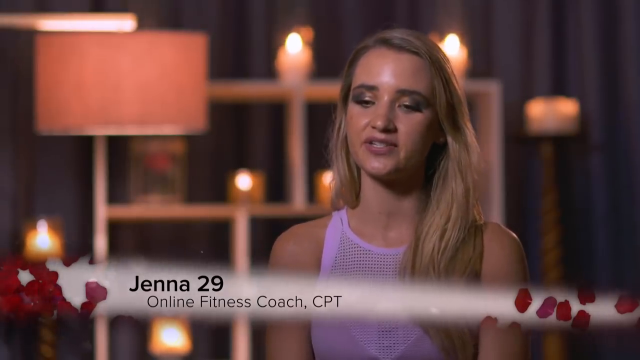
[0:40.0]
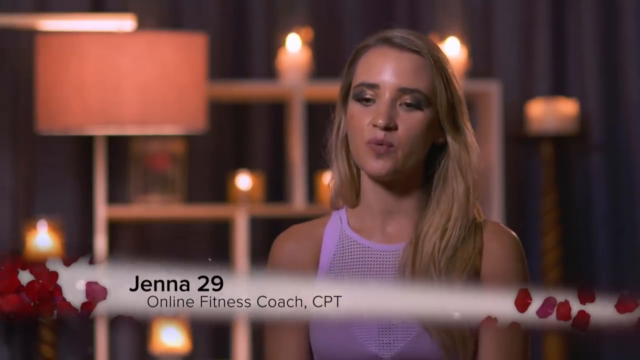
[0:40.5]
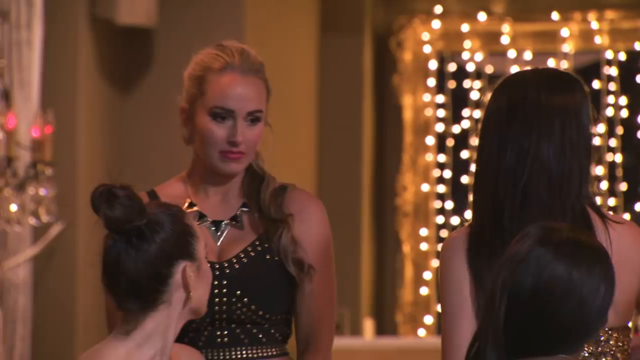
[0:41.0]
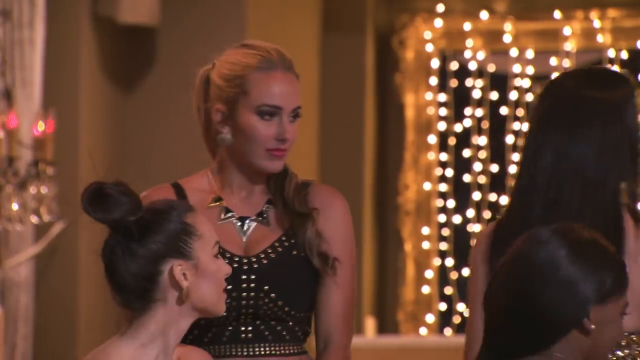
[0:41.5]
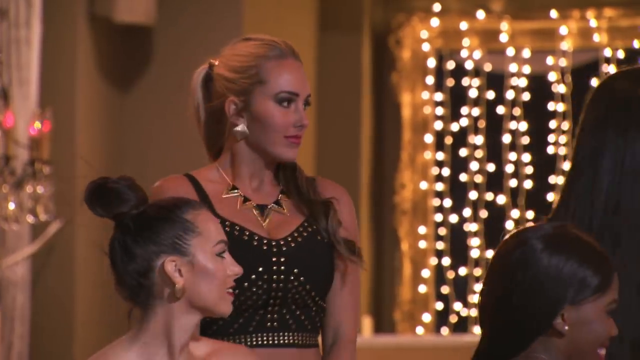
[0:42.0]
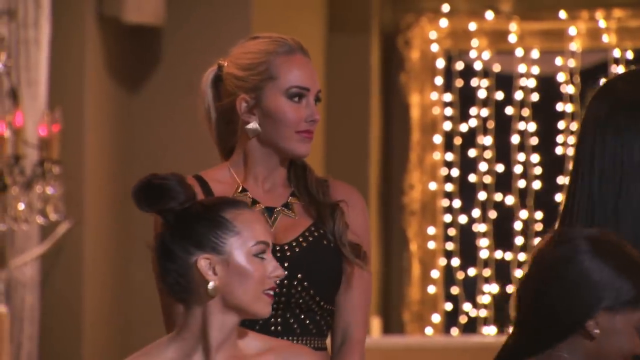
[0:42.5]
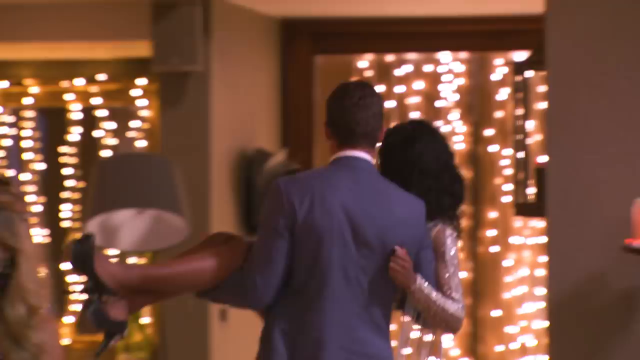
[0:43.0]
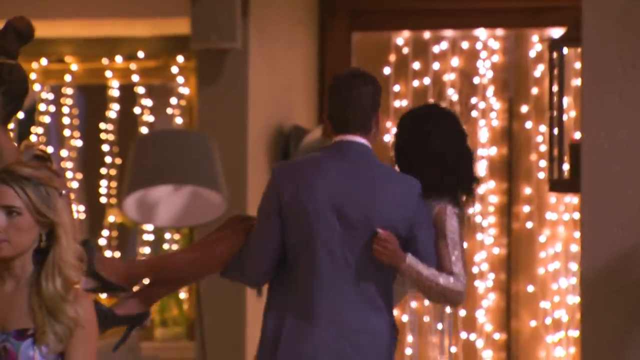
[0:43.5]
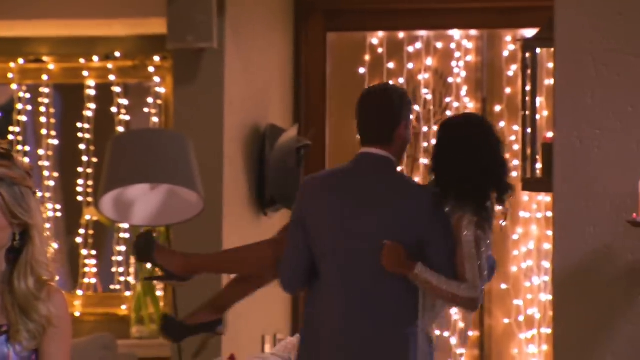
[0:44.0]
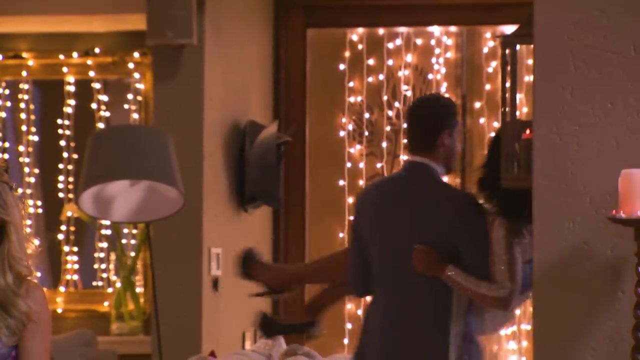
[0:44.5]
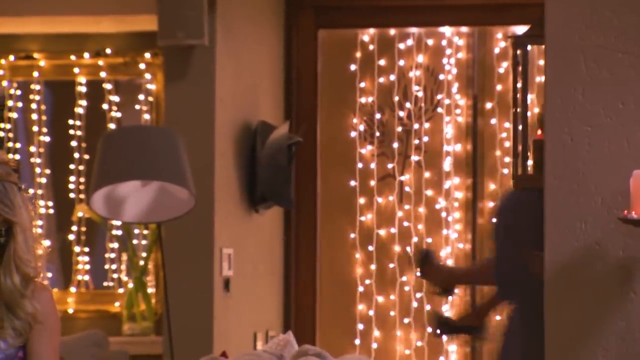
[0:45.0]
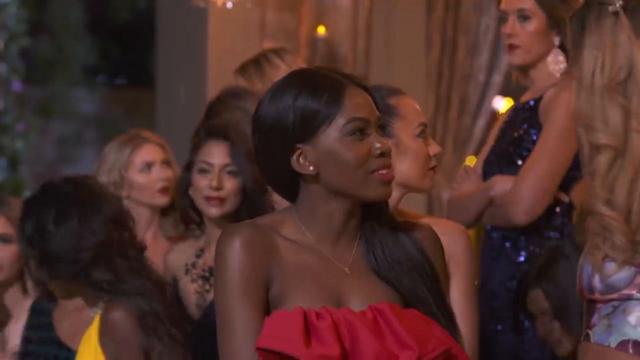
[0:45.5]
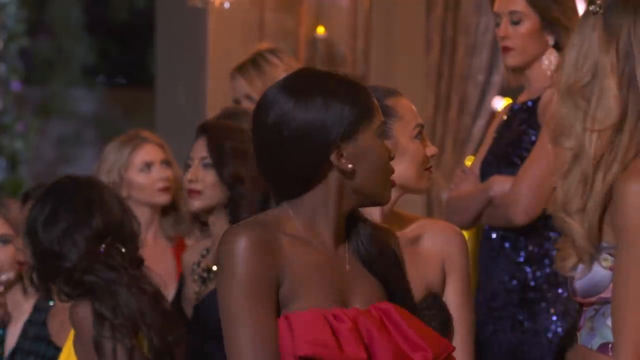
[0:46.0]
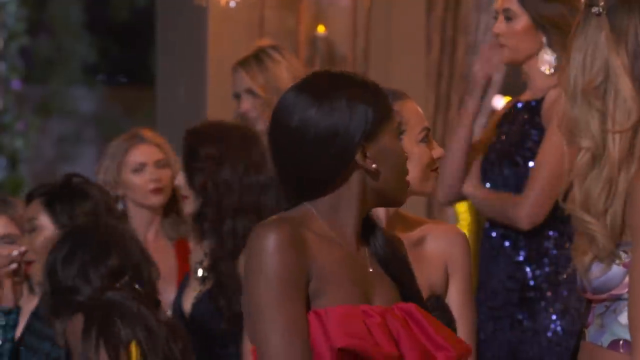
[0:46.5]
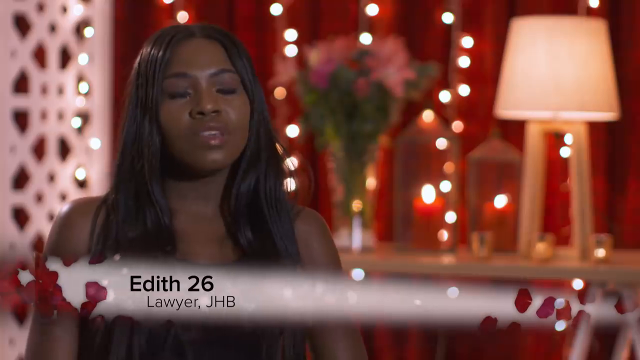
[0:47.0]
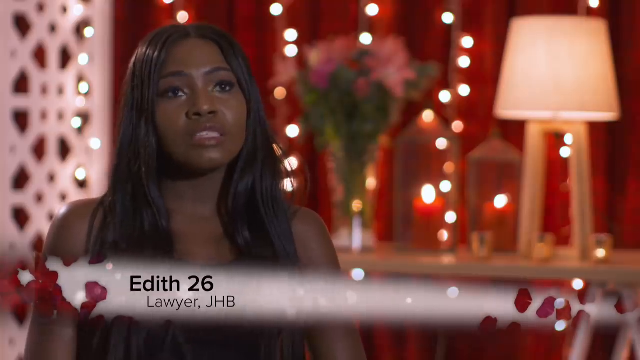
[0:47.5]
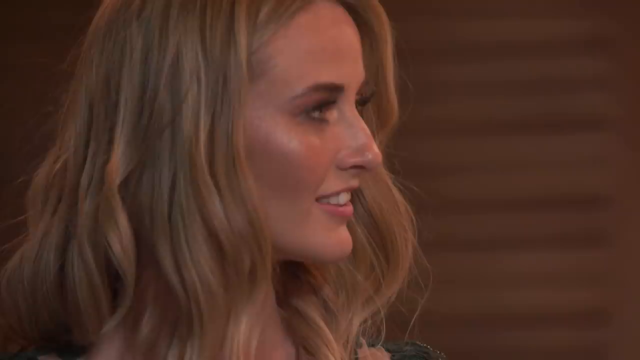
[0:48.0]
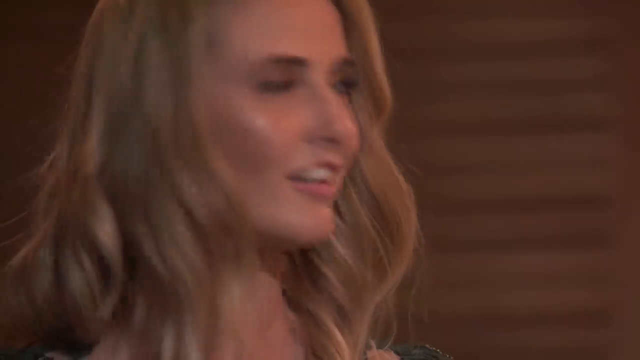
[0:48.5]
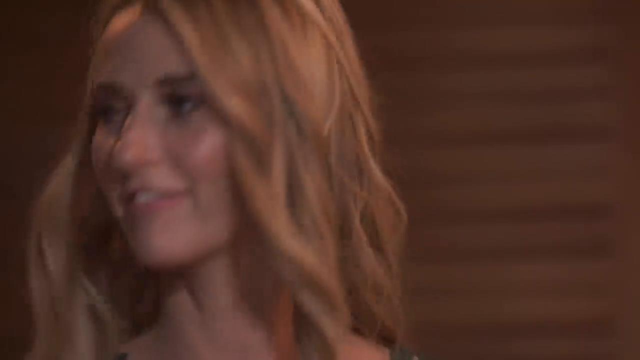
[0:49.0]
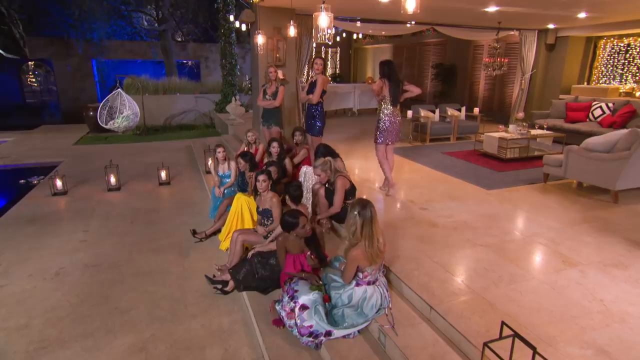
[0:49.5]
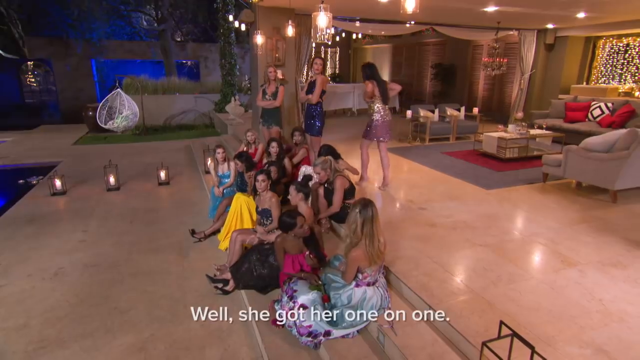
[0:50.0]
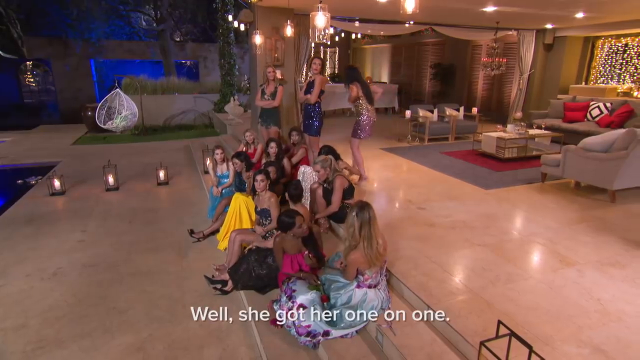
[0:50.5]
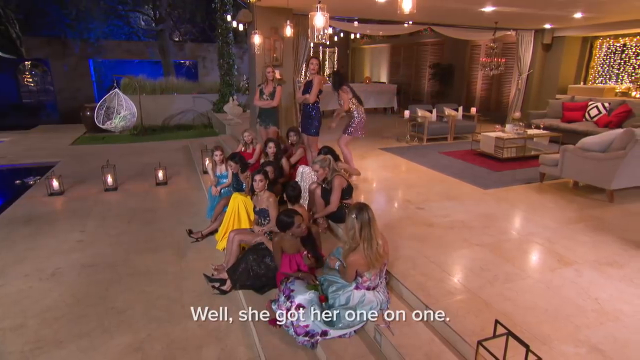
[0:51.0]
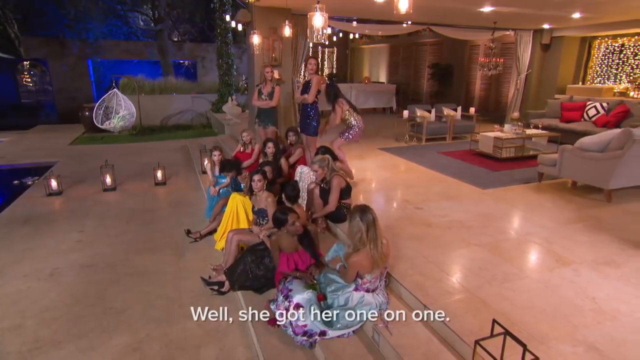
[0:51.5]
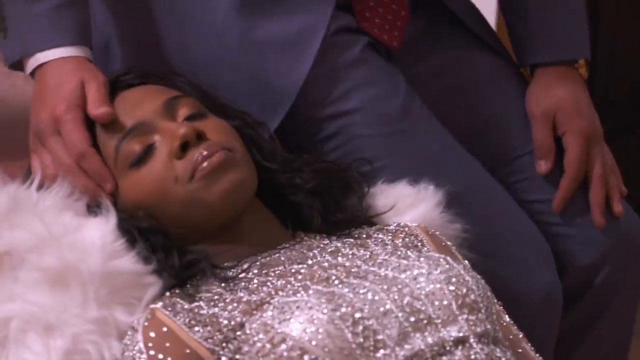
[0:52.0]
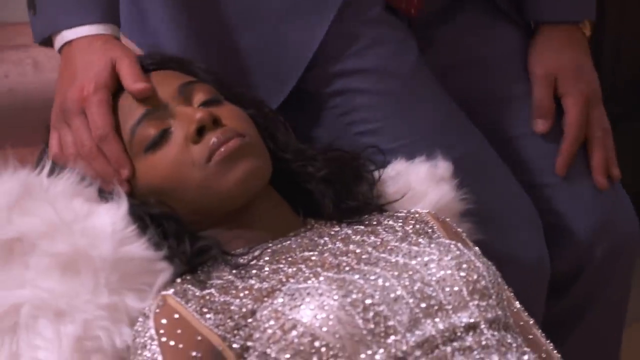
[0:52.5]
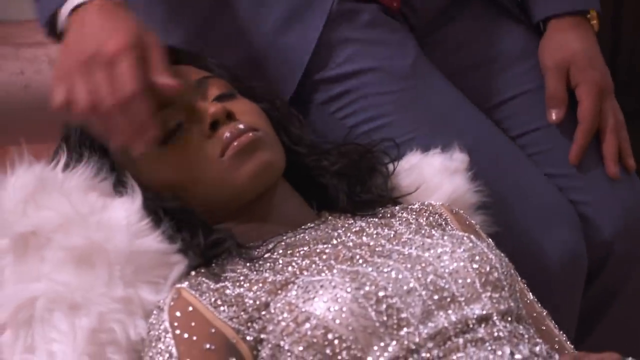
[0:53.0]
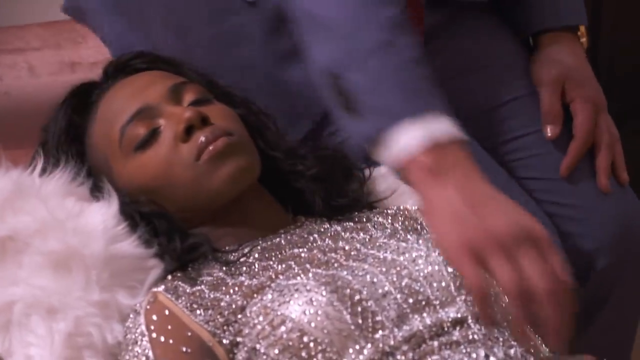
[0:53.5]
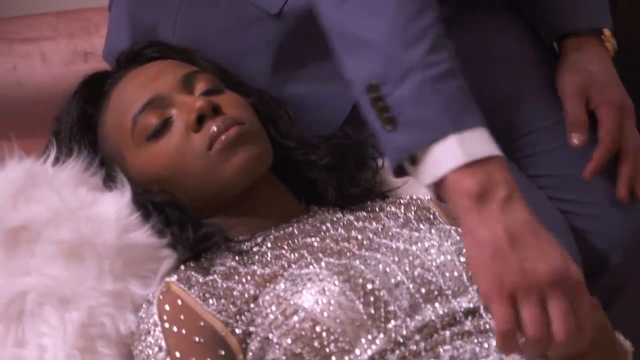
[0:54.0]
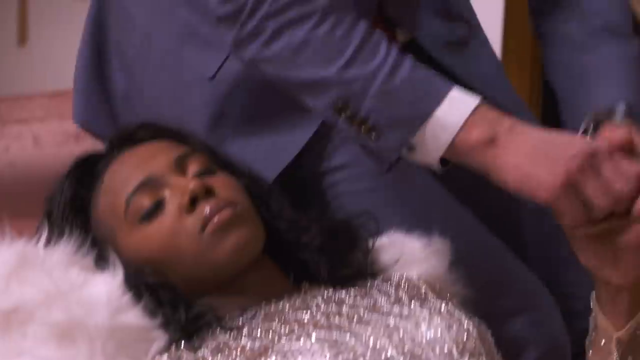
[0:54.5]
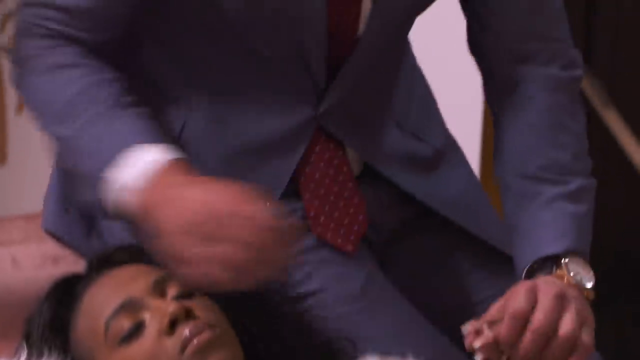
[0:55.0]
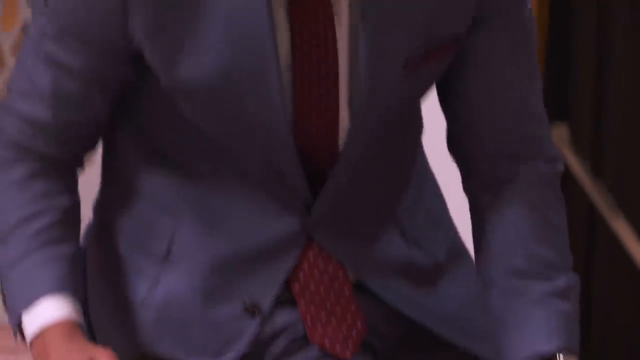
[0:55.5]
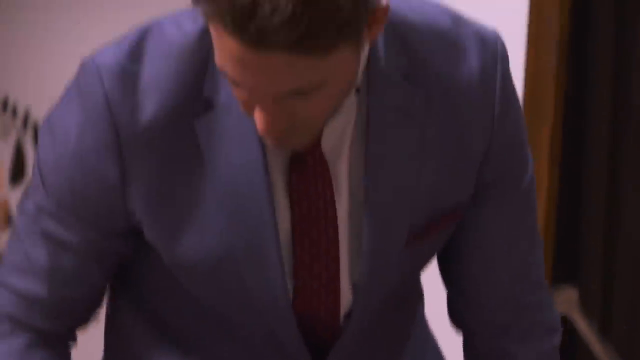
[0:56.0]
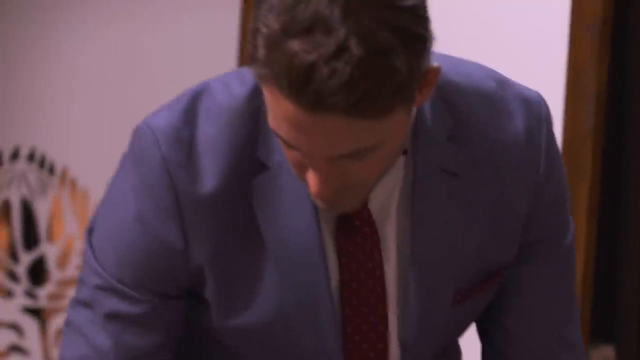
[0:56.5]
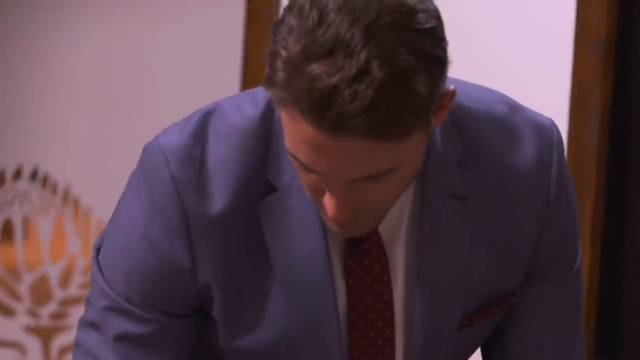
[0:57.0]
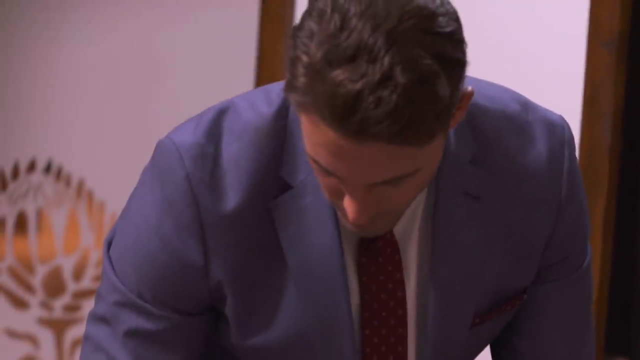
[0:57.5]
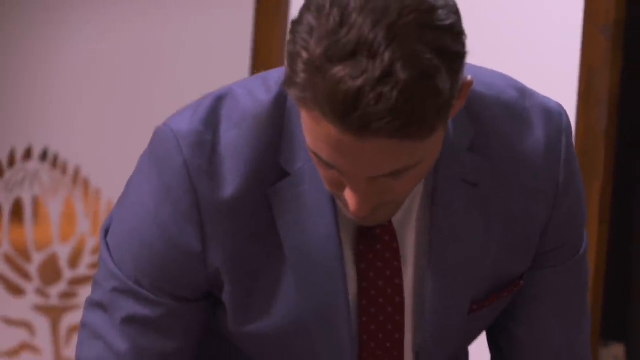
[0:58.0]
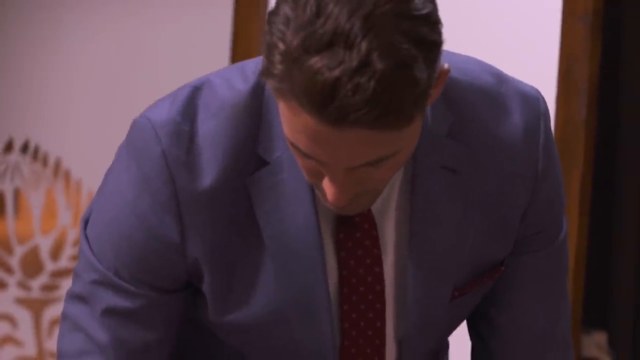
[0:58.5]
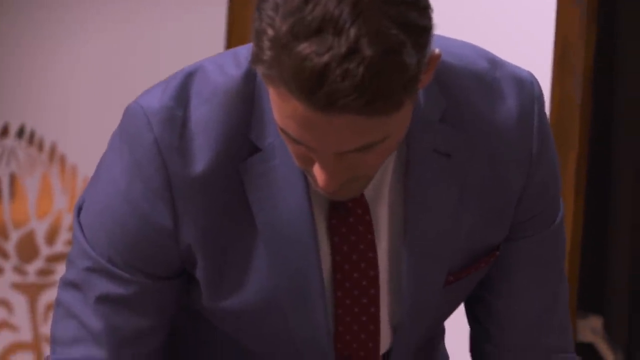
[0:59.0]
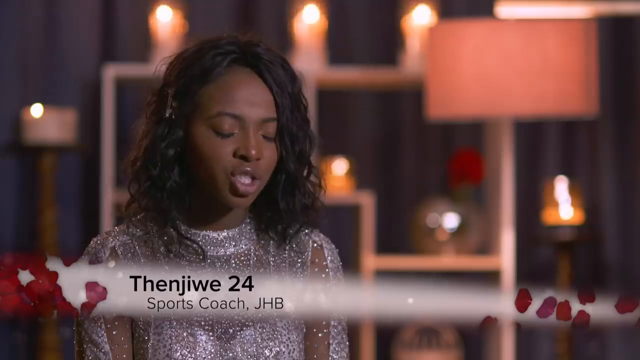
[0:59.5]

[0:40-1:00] A white woman of about 30 with long blonde hair, wearing a white sleeveless top, is seated in a dimly lit room talking to the camera. Behind her is a cabinet with about six lit candles, and a pastel lamp is on the left. On-screen text gives her name as "Jenna, 29" with "online fitness coach, CPT" underneath on a white background. The scene quickly changes to four other women, two of them on the left-hand side: white women about 30 years old. One has long blonde hair tied back and wears silver earrings and a black necklace with triangular-shaped stones. The other, also white, has black hair tied into a band at the top. Many lights behind them light the dark room.